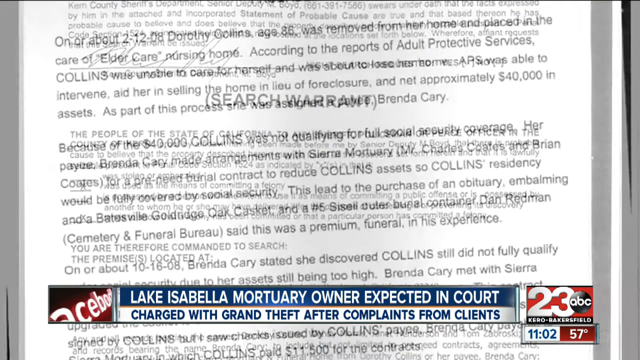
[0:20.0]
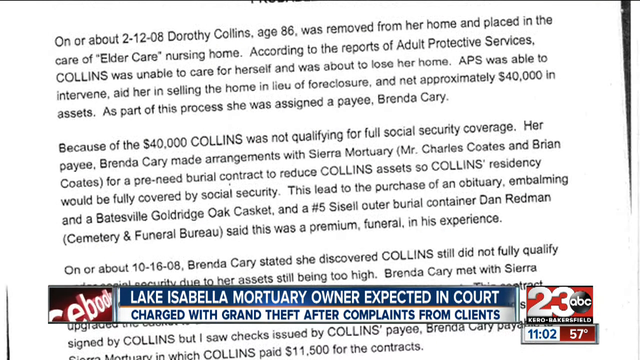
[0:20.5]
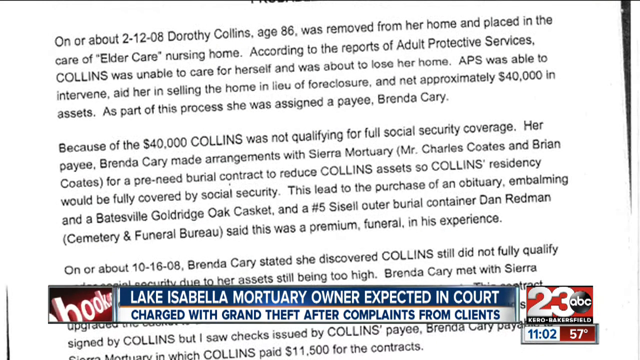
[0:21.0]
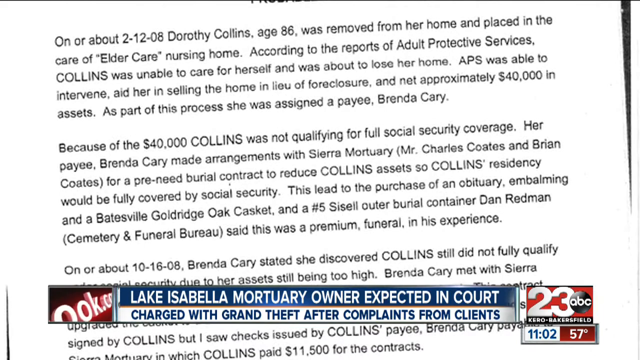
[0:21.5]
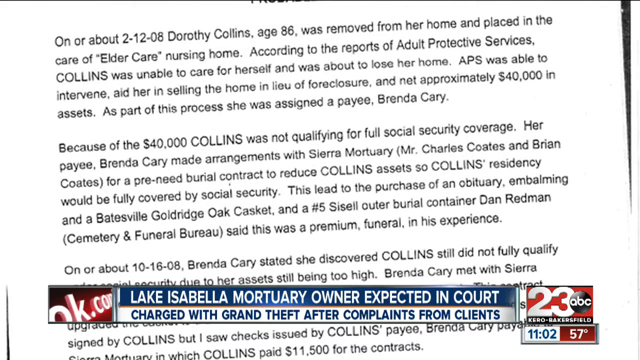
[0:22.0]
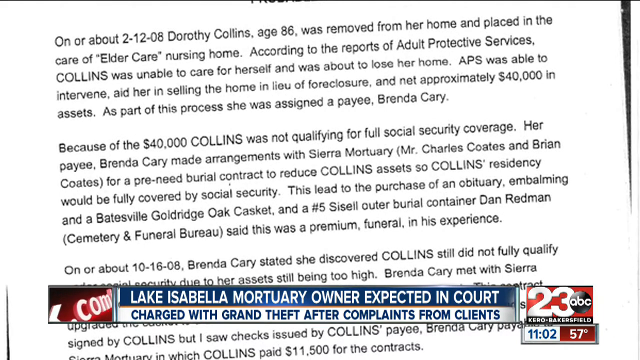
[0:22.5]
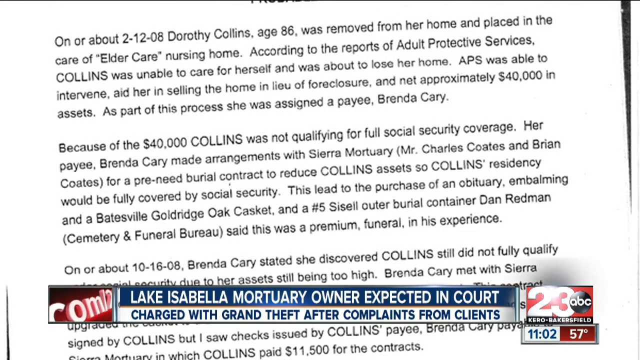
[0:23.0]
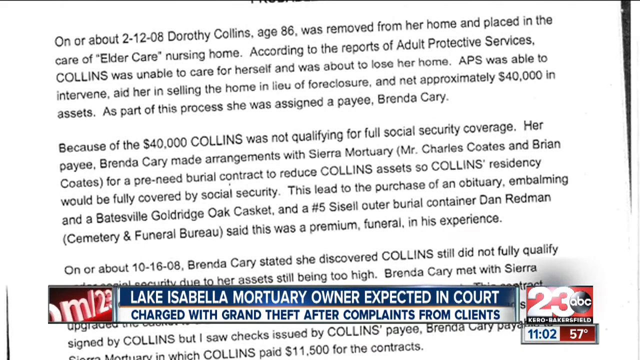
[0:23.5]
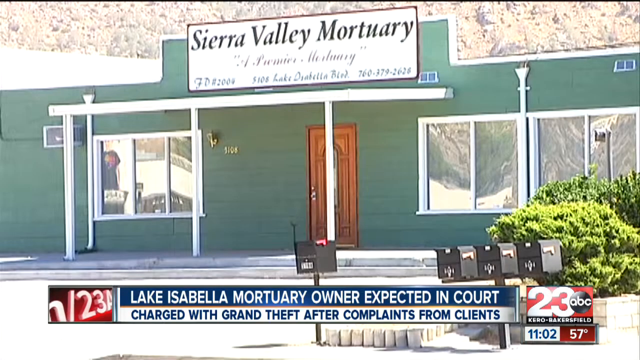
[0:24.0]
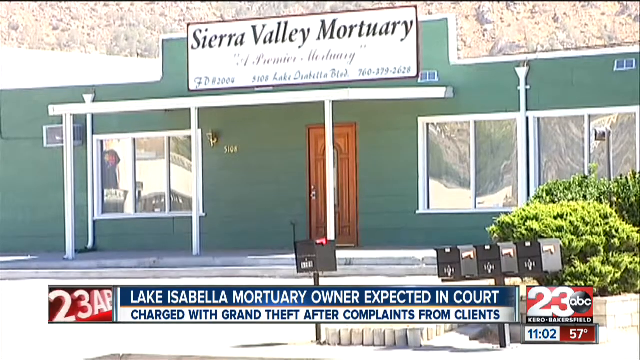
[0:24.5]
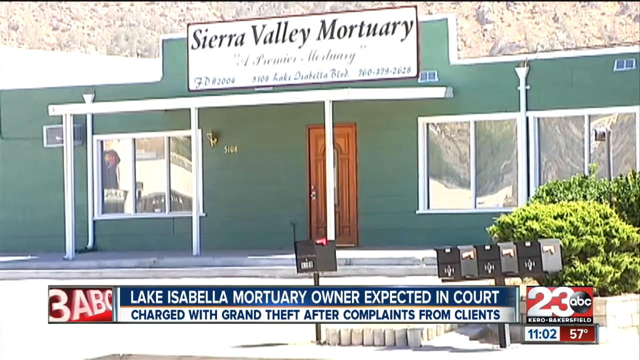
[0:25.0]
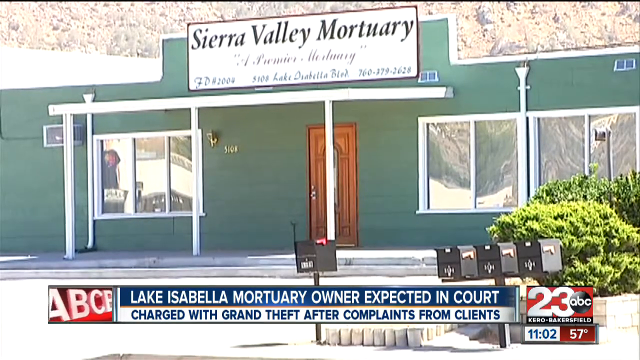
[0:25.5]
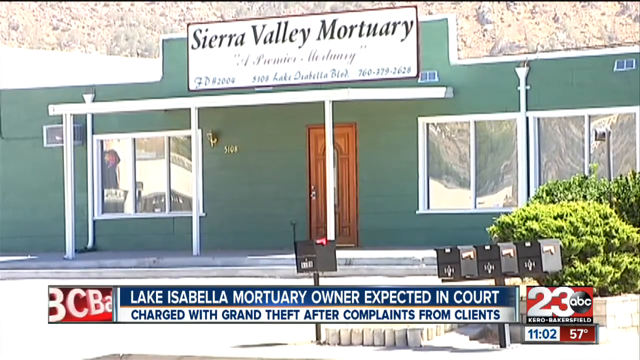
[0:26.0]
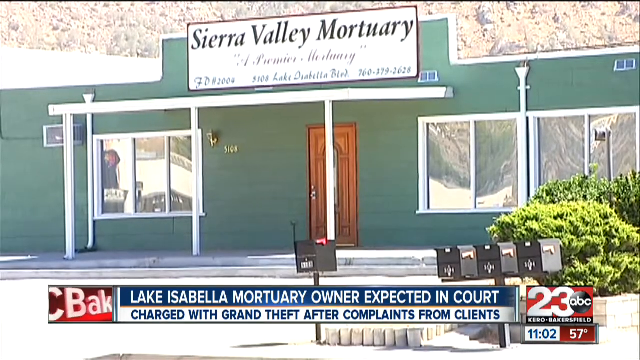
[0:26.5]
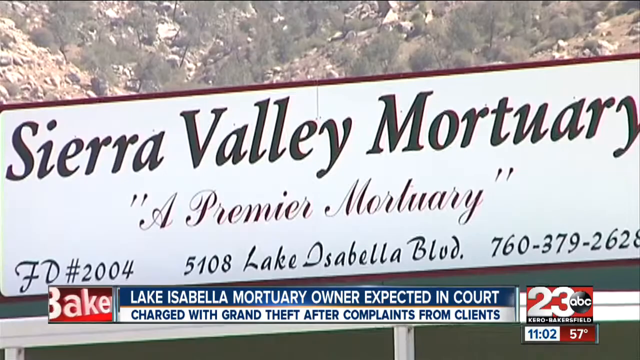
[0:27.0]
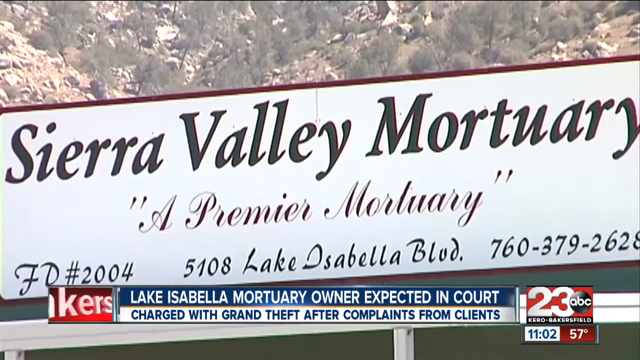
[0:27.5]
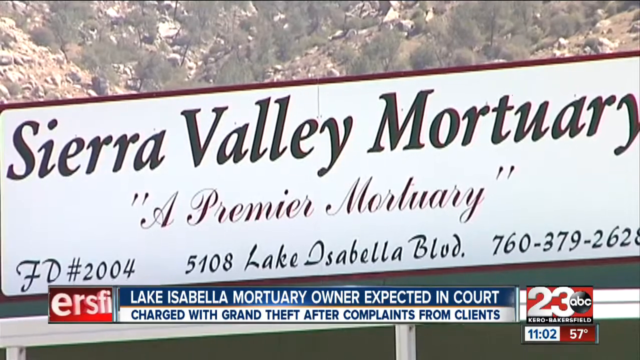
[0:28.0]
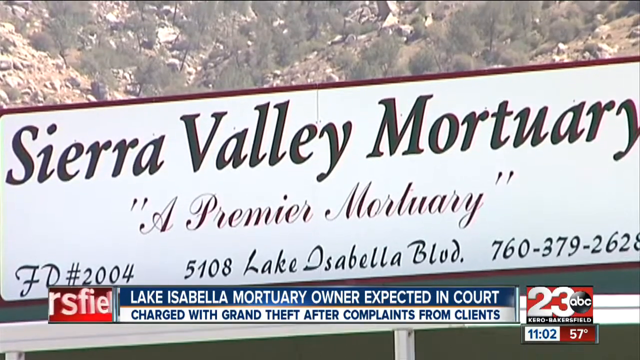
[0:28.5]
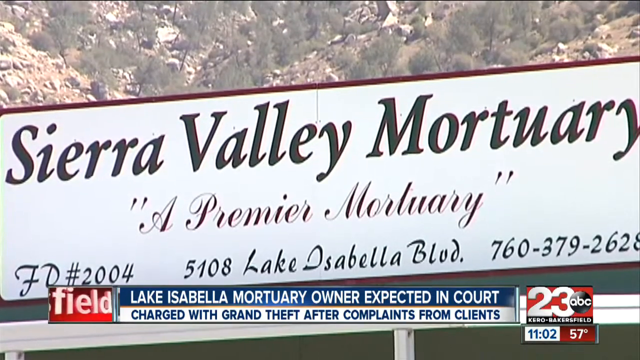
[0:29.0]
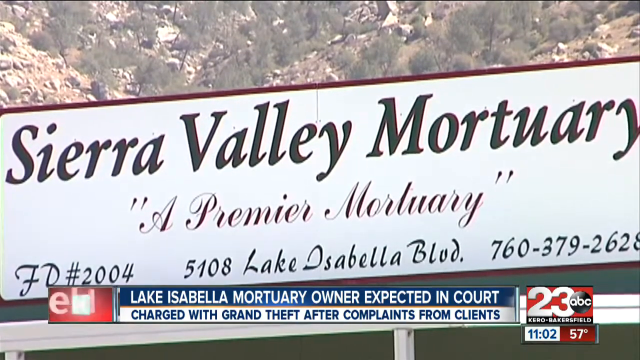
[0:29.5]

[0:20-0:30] A headline reads "Lake Isabella mortuary owner expected in court, charged with grand theft after complaints from clients." An article or documents are shown, laying out the nature of the crimes and specific details.